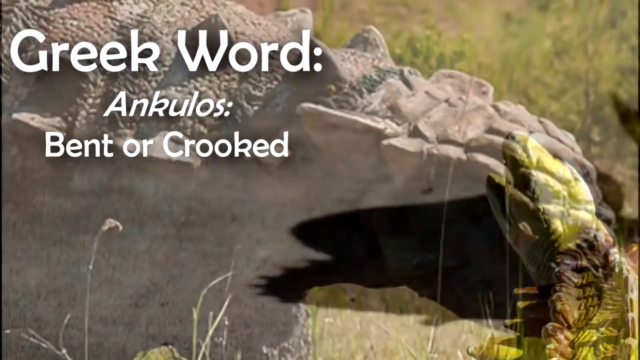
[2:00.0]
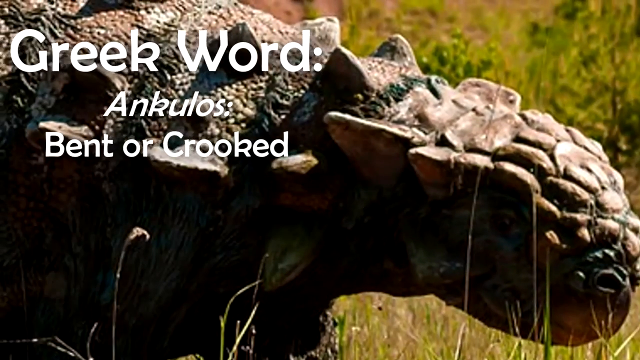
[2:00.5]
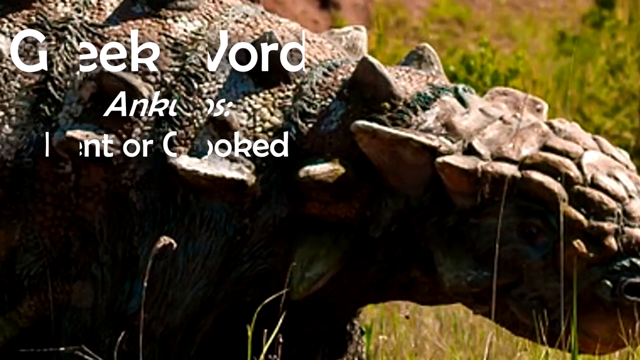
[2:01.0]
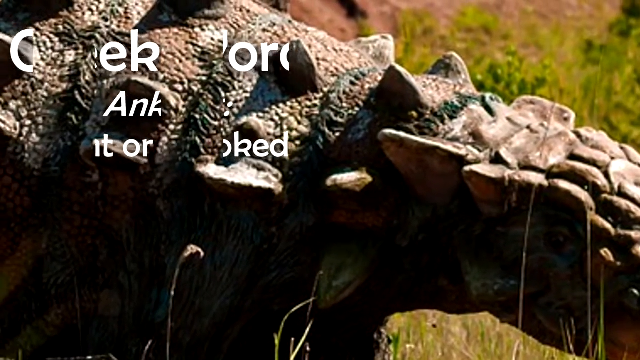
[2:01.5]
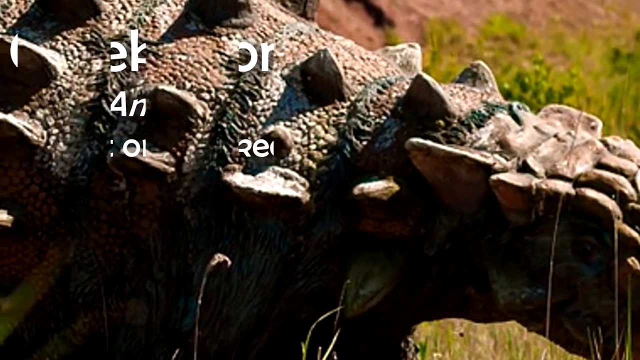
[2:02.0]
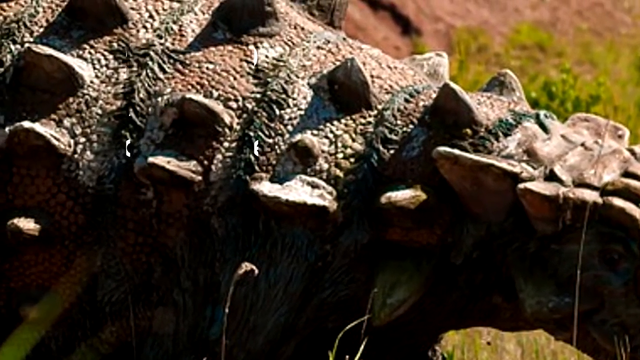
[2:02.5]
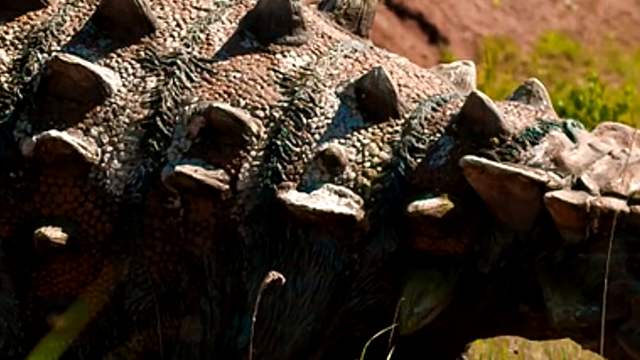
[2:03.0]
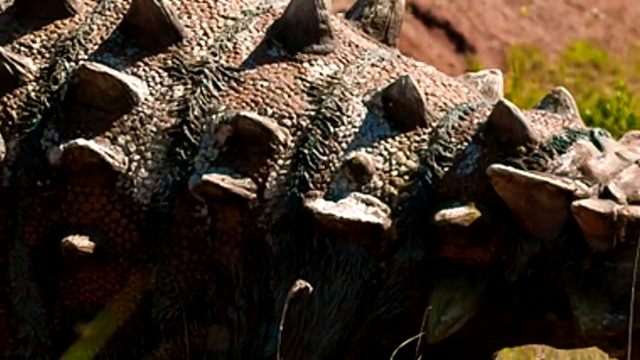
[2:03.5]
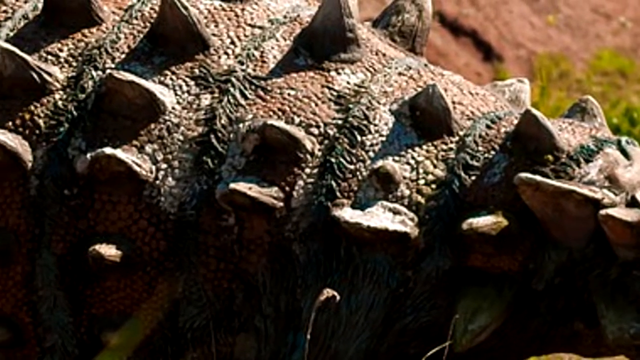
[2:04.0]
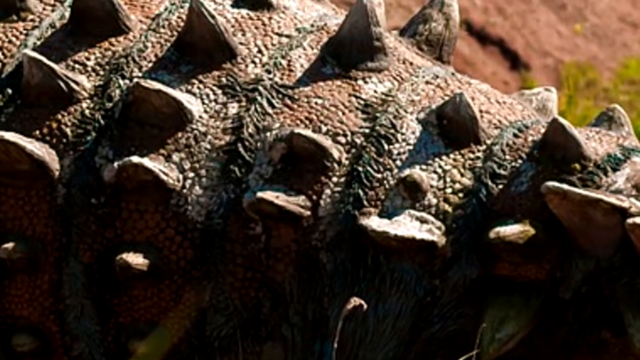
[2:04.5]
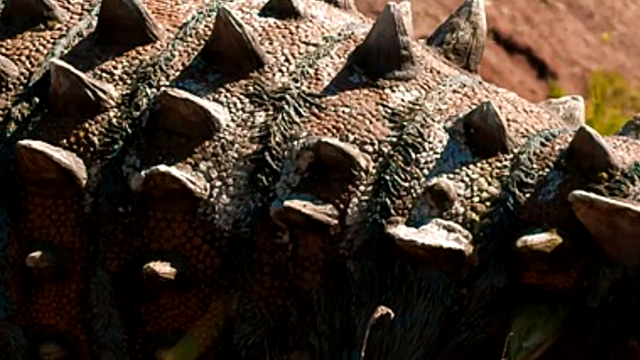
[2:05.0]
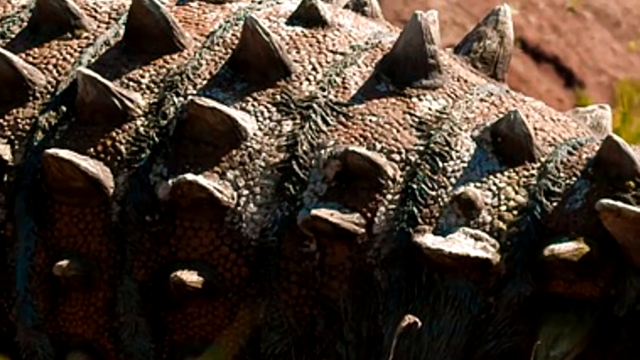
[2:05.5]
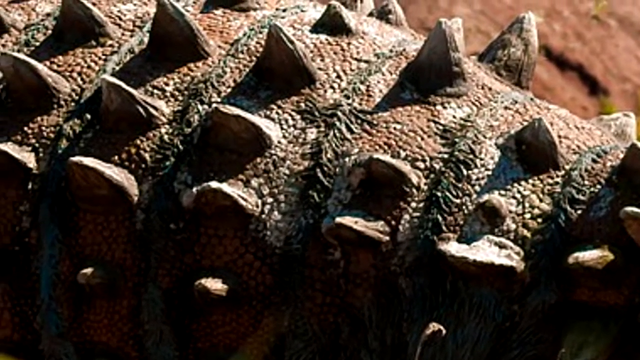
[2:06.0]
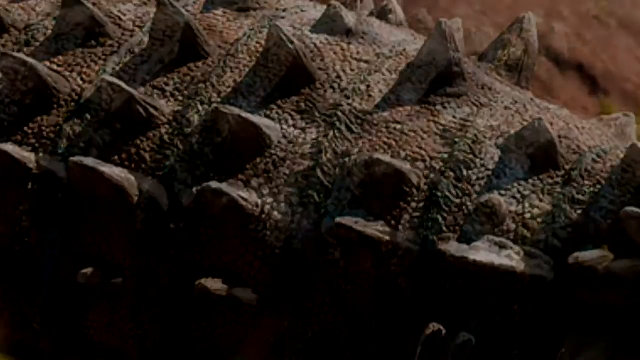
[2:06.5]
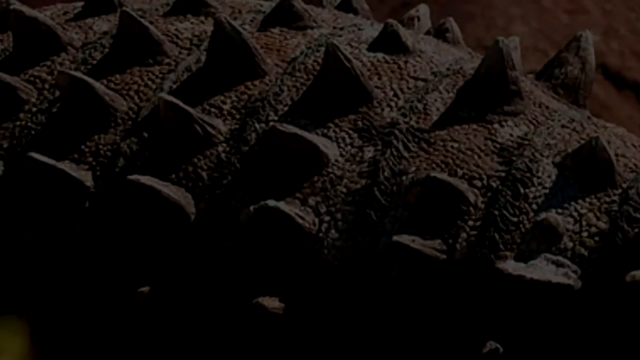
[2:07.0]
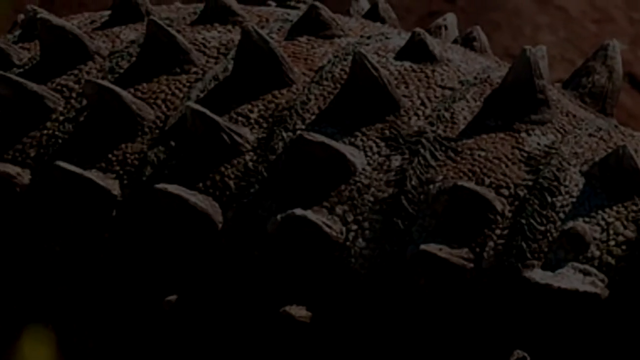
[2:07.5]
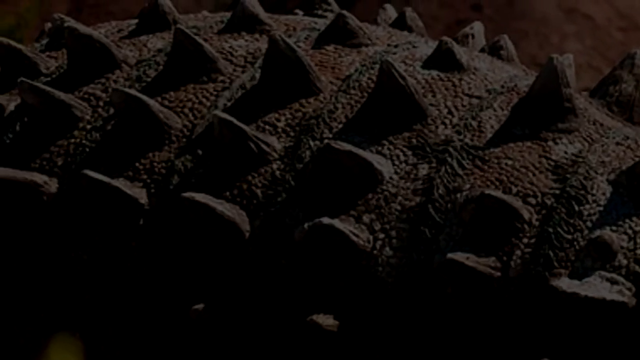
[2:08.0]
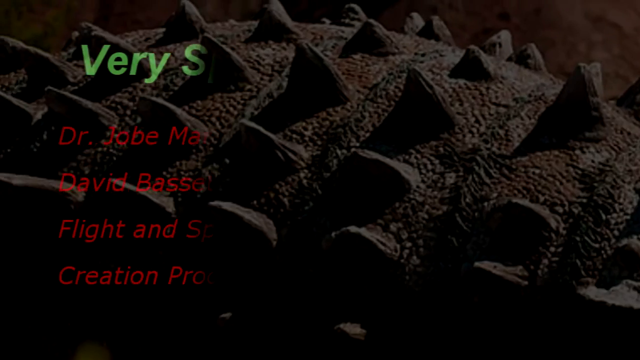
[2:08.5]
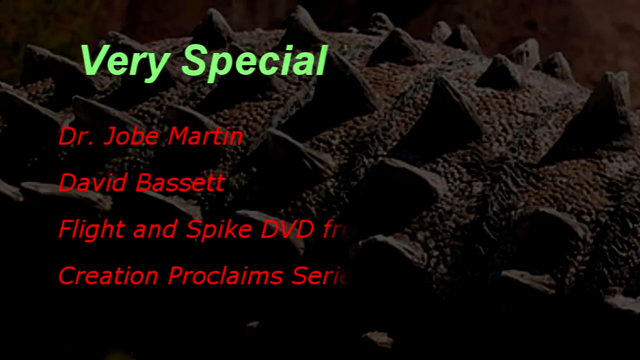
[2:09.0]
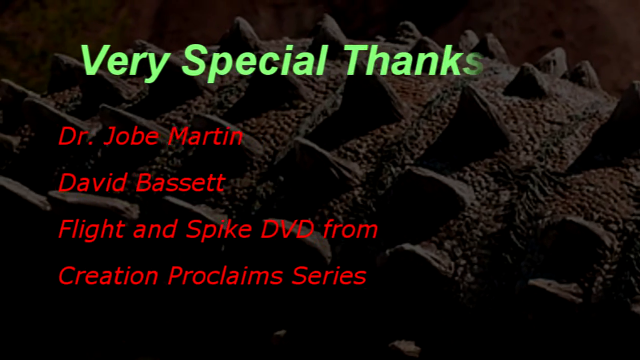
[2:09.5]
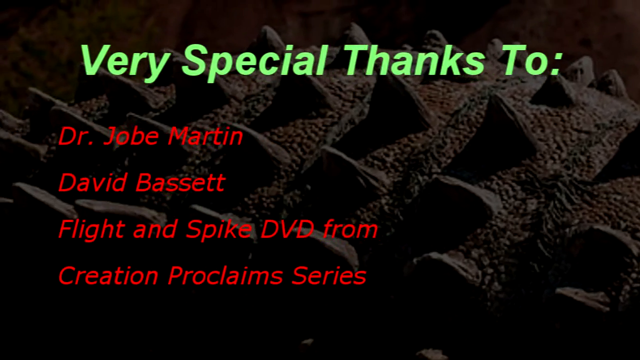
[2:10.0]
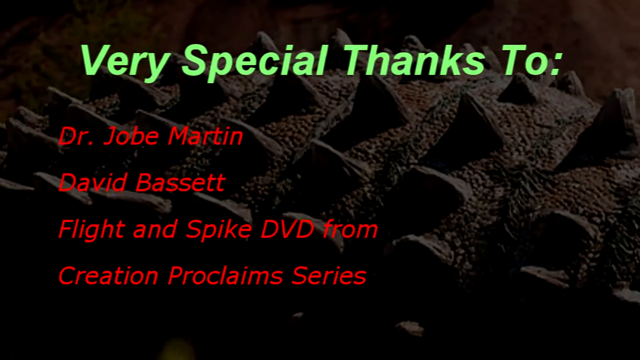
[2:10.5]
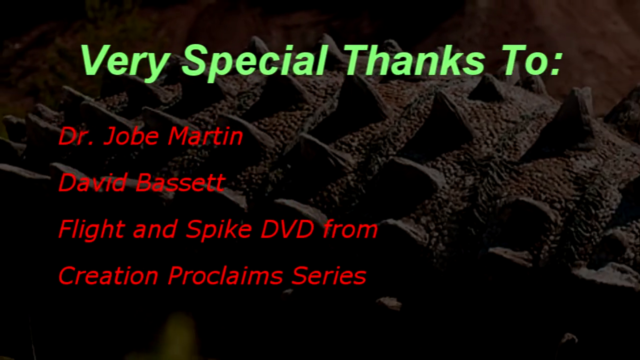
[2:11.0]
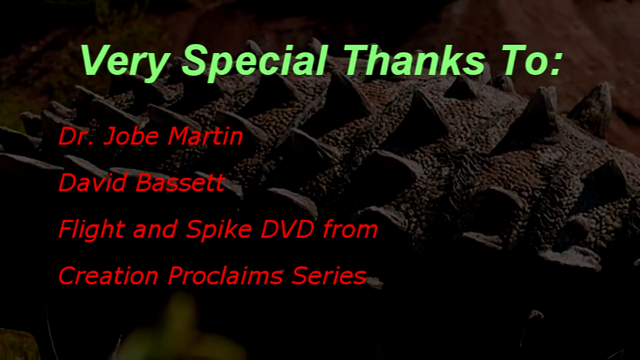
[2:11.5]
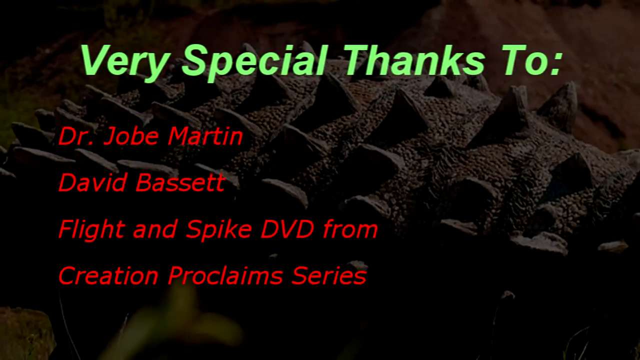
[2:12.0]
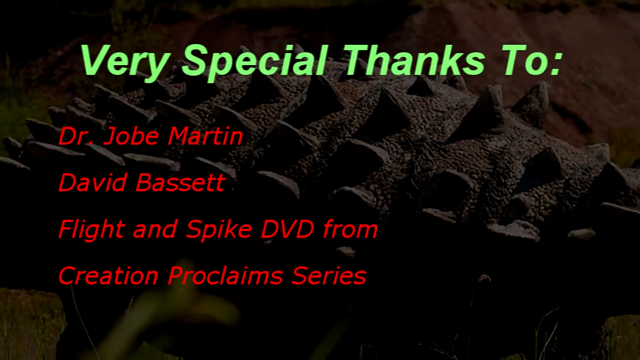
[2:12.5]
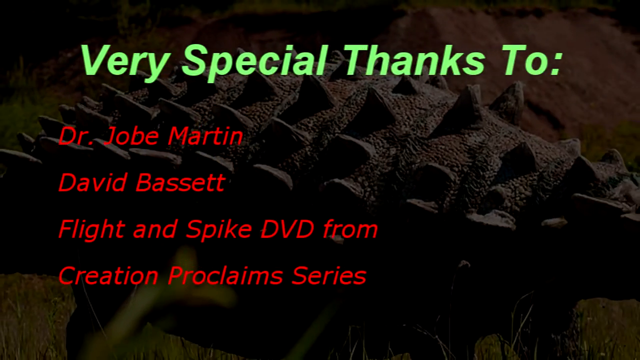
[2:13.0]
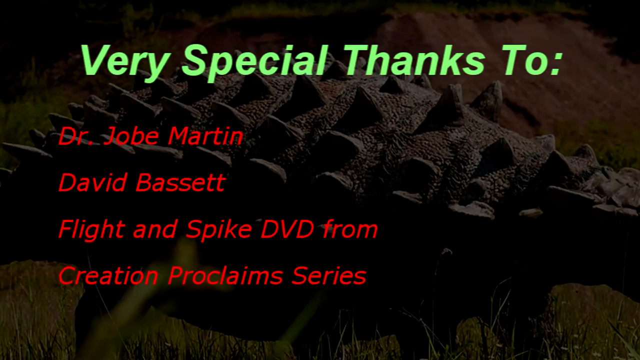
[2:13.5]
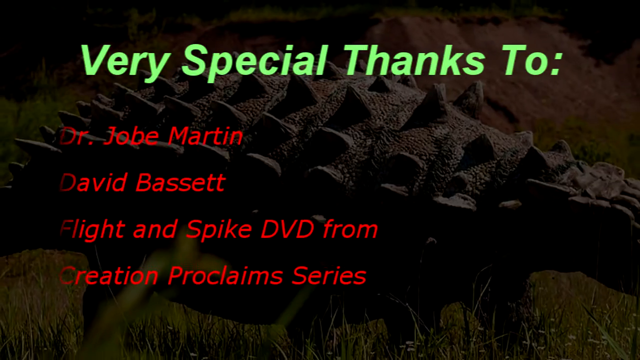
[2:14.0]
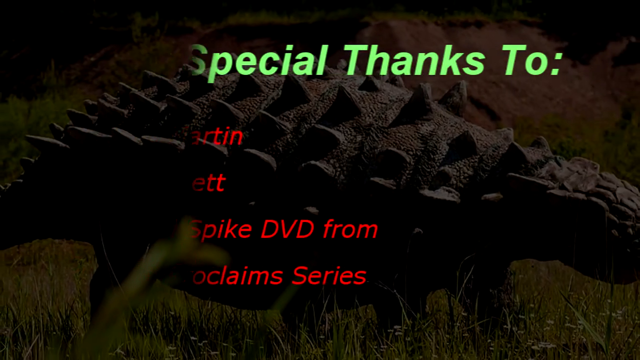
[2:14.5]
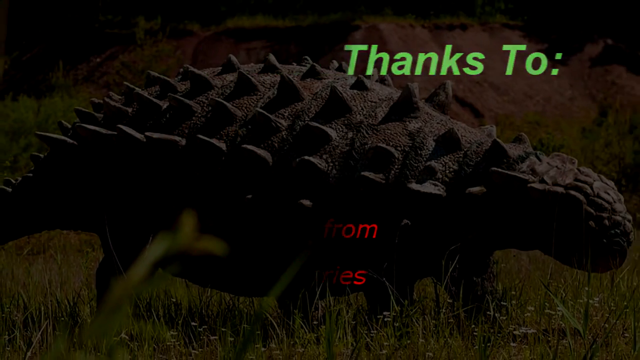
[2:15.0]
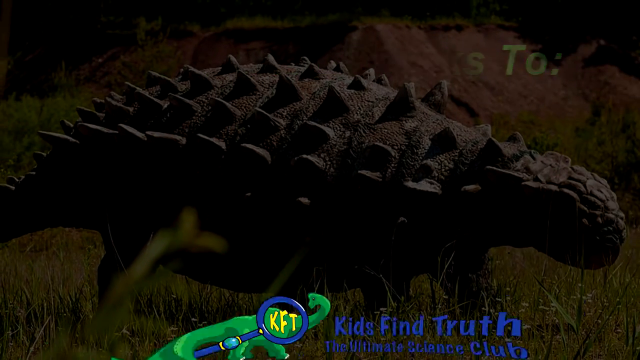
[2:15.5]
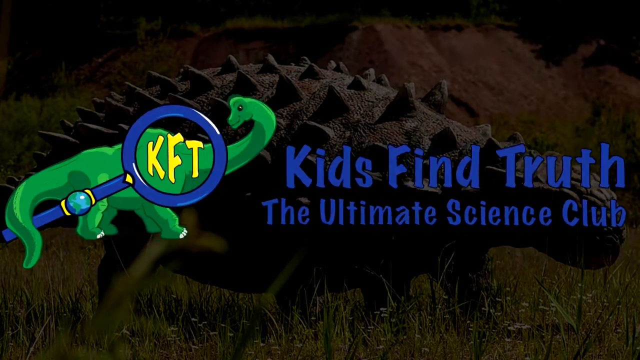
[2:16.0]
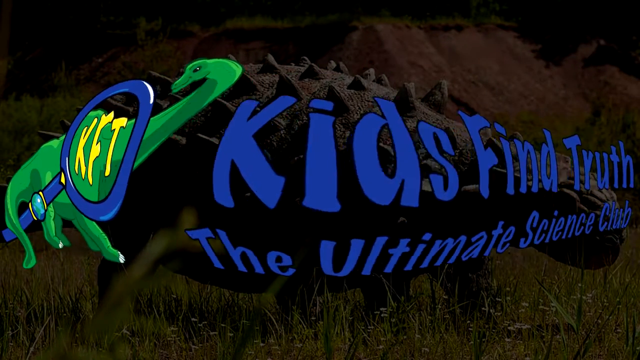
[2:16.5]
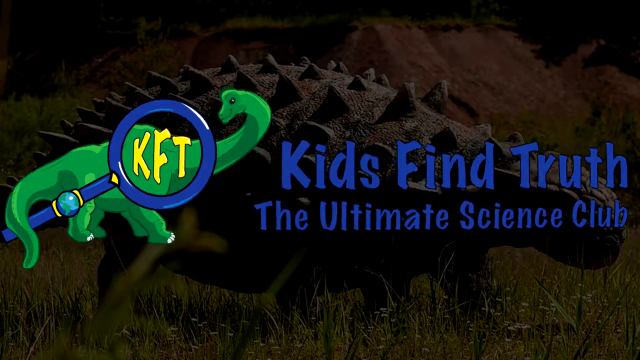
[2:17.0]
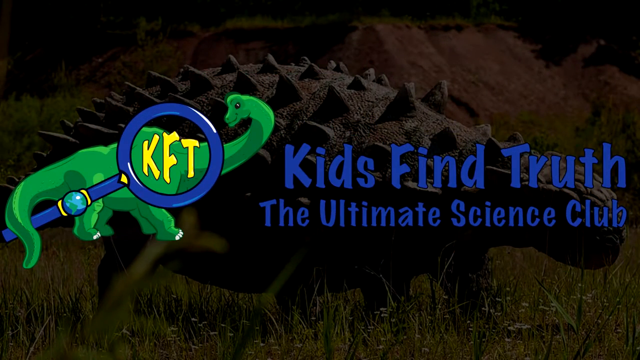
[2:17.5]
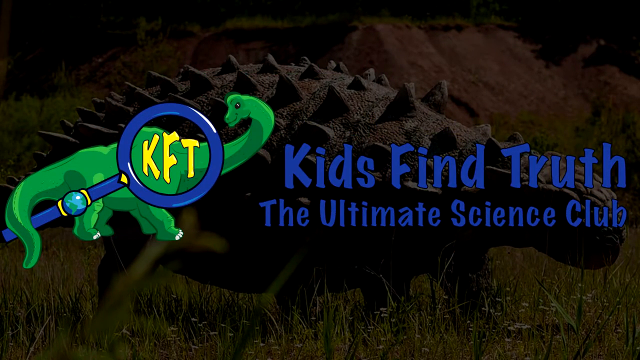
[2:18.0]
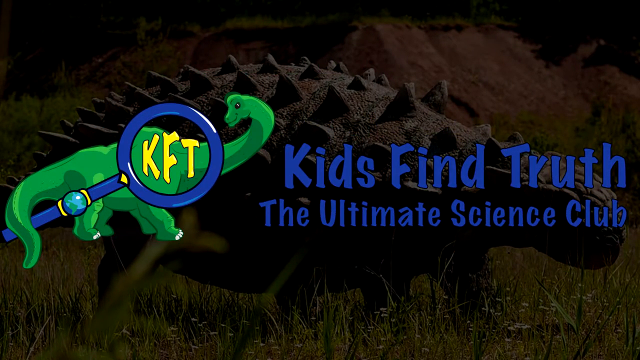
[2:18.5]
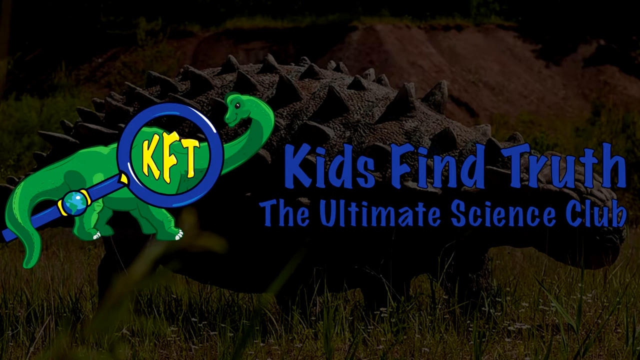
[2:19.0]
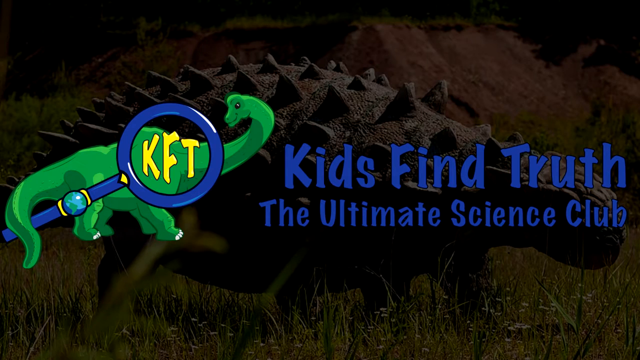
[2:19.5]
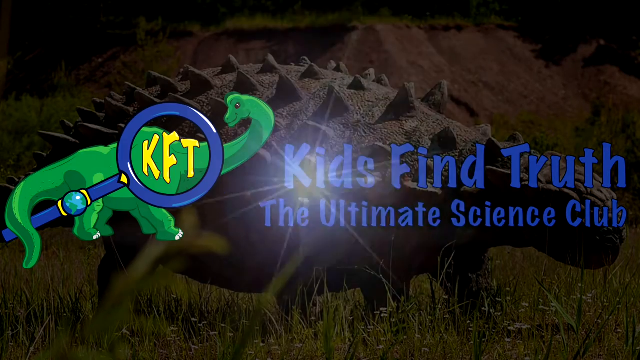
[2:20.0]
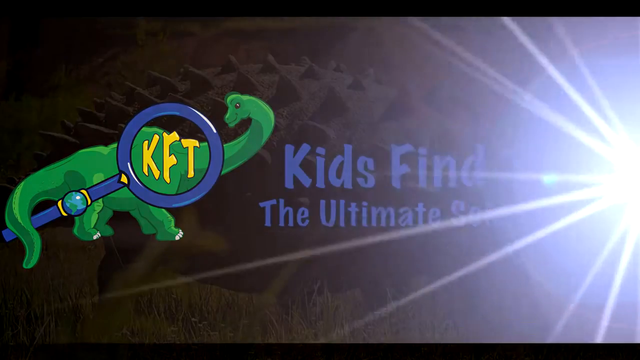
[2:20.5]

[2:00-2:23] The text "Greek word" is larger than the rest of the text; "Ankylos" is in italics and "bent or crooked" is in regular text. The words are wiped away by rectangular bars that form on the sides of the paragraph. Where the text has disappeared, a picture of the backside of the dinosaur appears. The picture pans down its back, showing up close the large scales and the textured skin around them. The scales are in uniform rows and somewhat resemble shark teeth in their texture and faceted points. A dark black filter is then placed over the dinosaur's back. Green text at the top of the screen says "Very special thanks to," edited to look like it is being typed onto the screen. Underneath, red text shows the names Dr. Jobe Martin and David Bassett, and the rest of the red text reads "Flight and Spike DVD from Creation Proclaimed series." The image of the dinosaur comes back to show its entirety. The text fades out, and a small drawing of a green dinosaur appears with a blue magnifying glass in front of it containing the letters "KFT." On the right side, rotating blue text comes onto the screen saying "Kids Find Truth The Ultimate Science Club." The image pulses upward before returning to normal. As the text fades out into a black screen, an animation of a star or bright sun is shown.